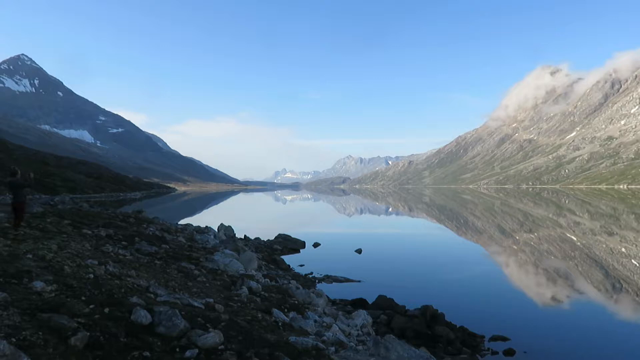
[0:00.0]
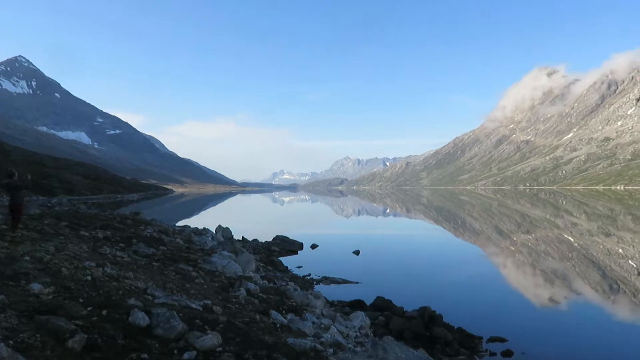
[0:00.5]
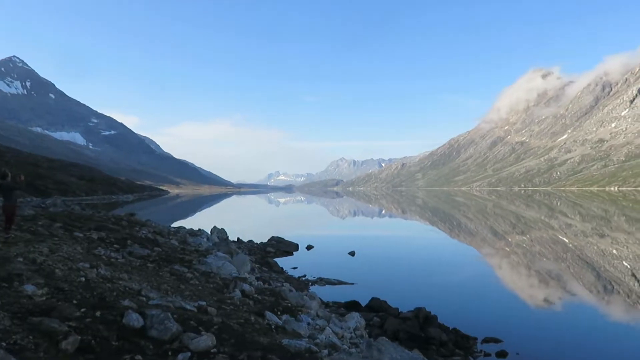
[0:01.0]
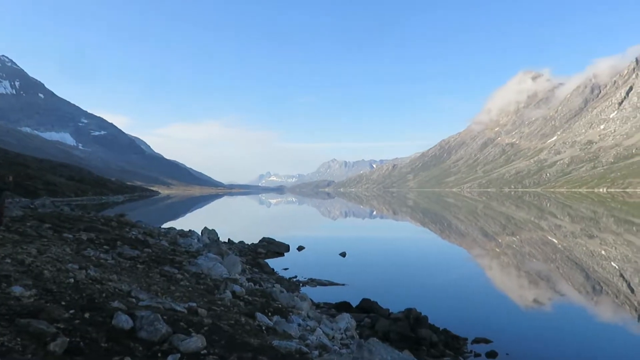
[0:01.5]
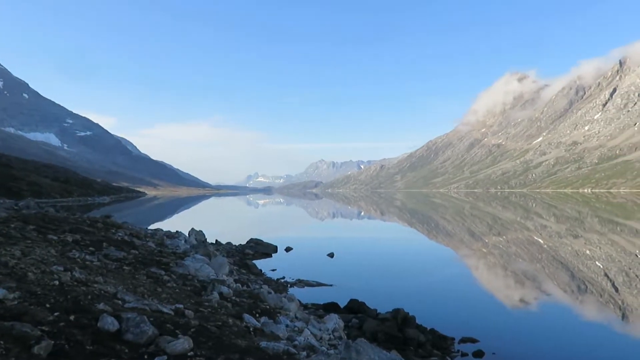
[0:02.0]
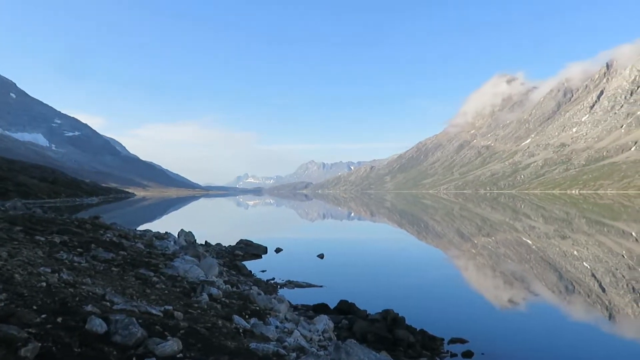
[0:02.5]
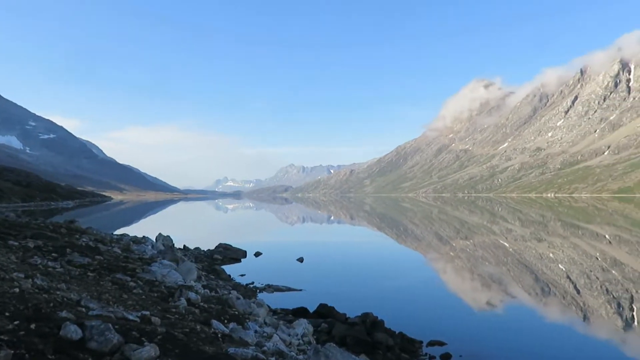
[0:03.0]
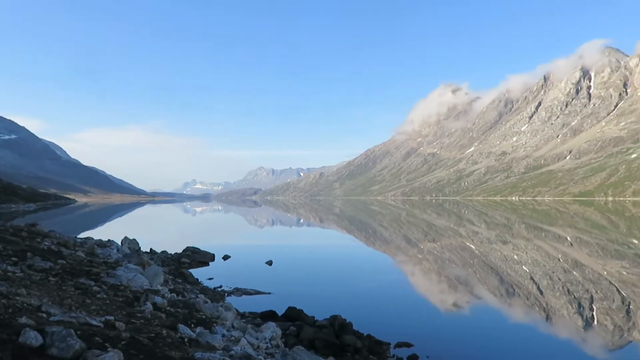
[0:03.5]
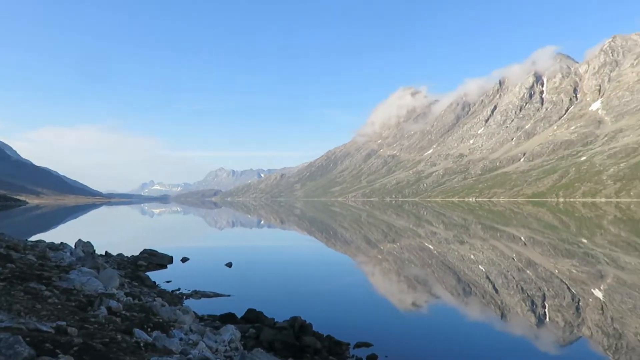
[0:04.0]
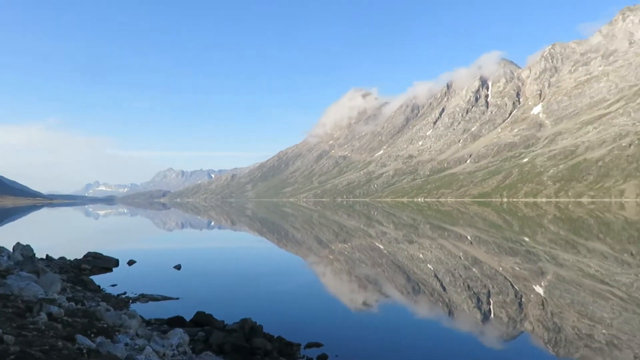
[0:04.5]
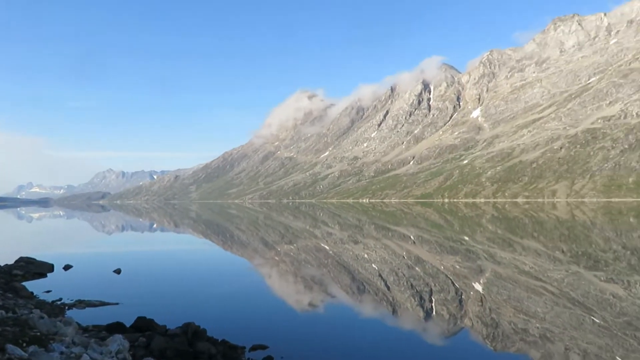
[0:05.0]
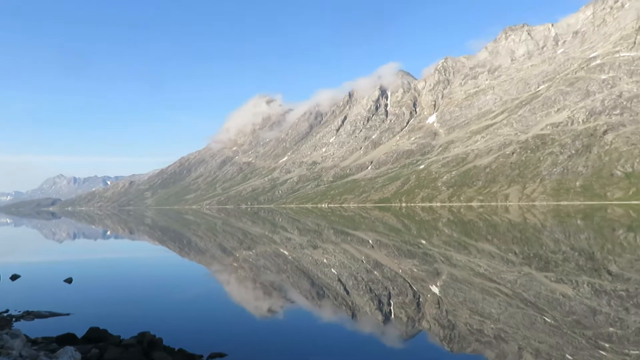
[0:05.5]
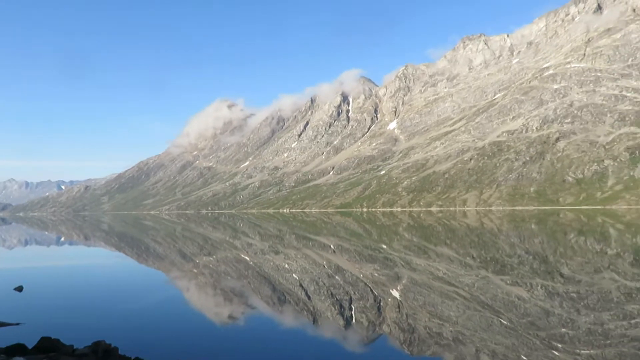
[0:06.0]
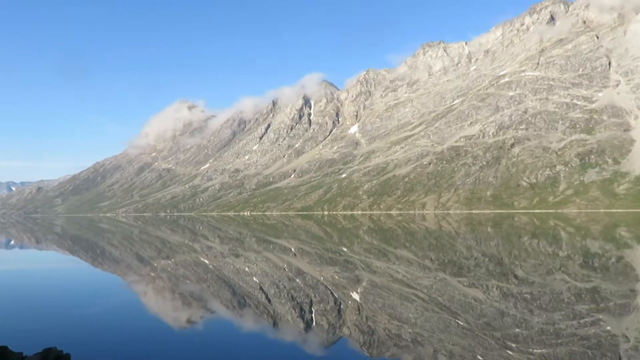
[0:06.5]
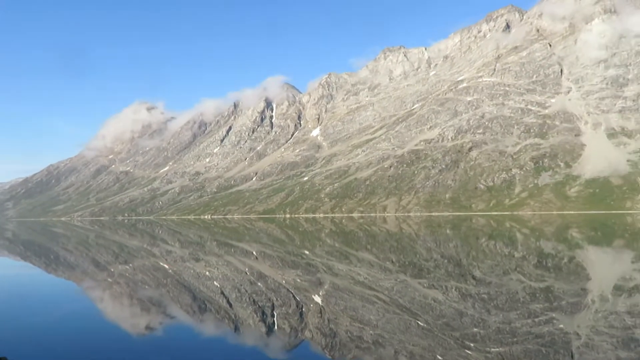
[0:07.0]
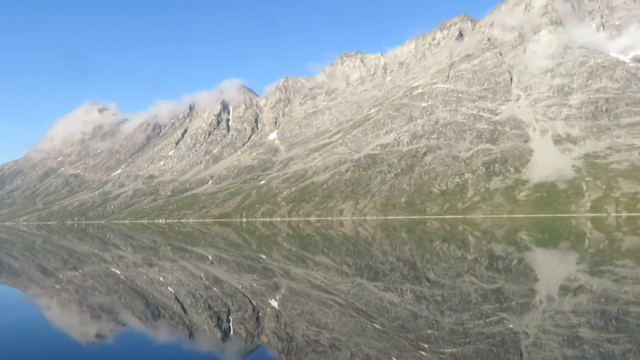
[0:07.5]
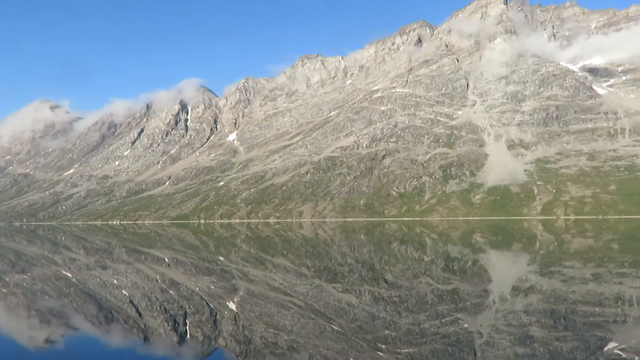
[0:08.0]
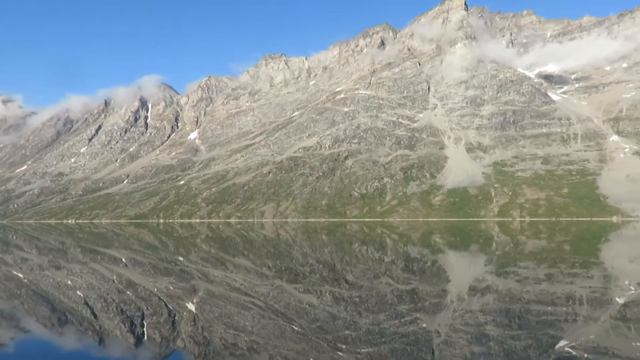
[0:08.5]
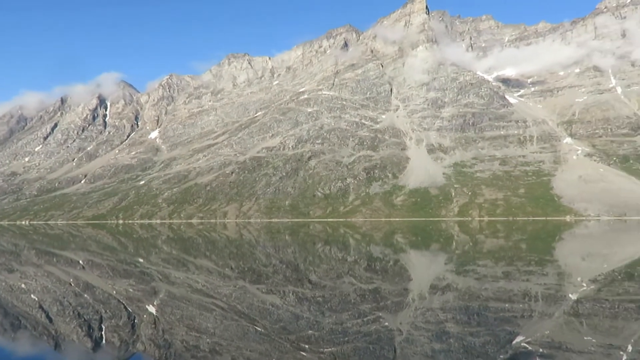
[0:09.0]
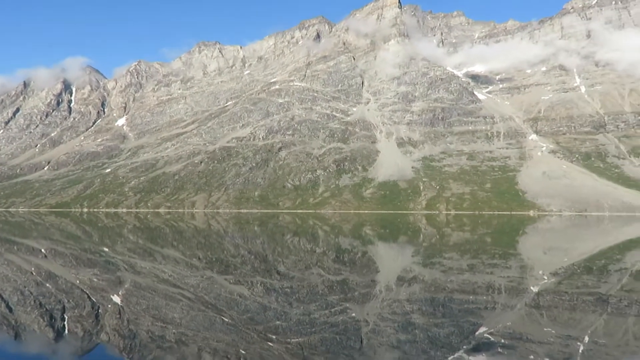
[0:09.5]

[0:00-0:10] A scenic view shows a mountainscape and a wide lake. At first, on the left of the frame, there is very rocky terrain, with dark black rocks about a foot in size each. This gives way to a flatter mountainous area on the left with some white, snow-covered areas. In the centre of the screen is a very large, flat lake, pale to turquoise blue in colour. Above it on the horizon there is some light white cloud, with some darker blue cloud at the top of the screen. On the right of the screen is a mountainscape as the camera pans round.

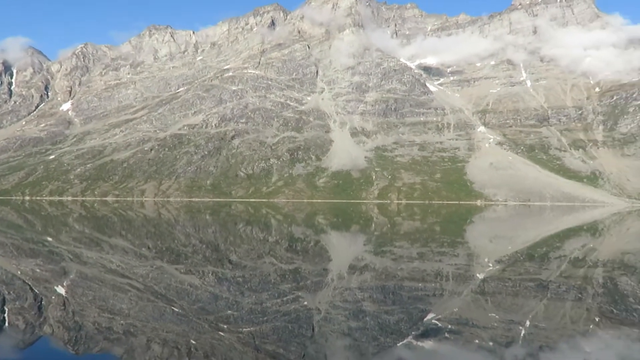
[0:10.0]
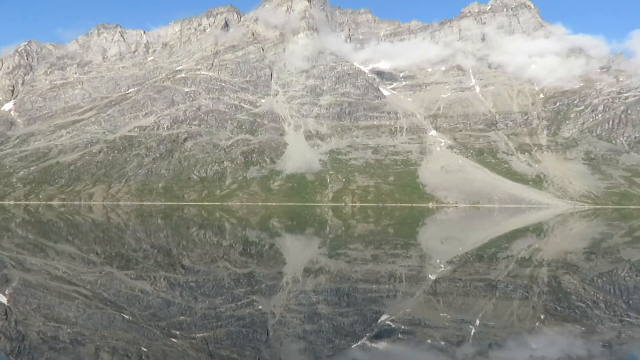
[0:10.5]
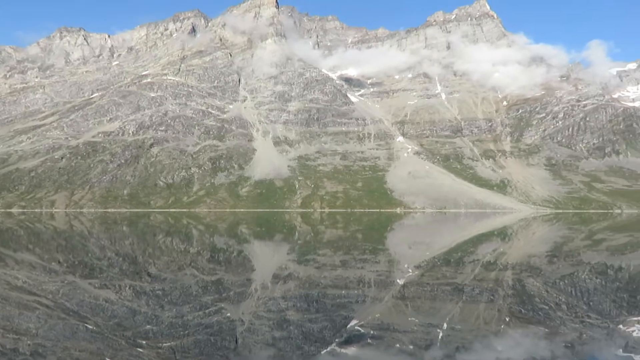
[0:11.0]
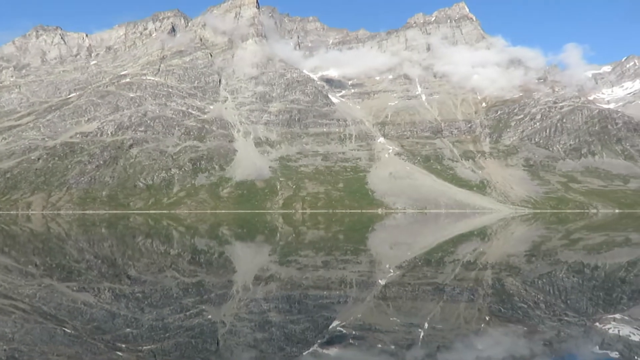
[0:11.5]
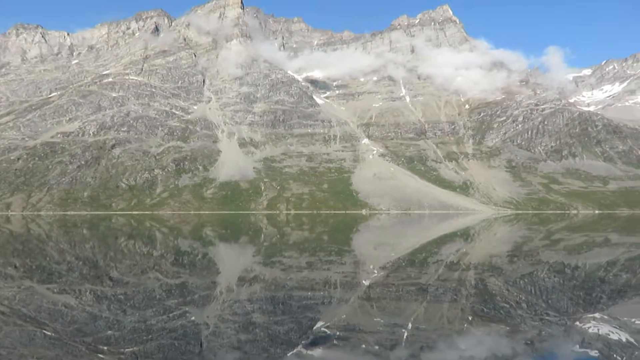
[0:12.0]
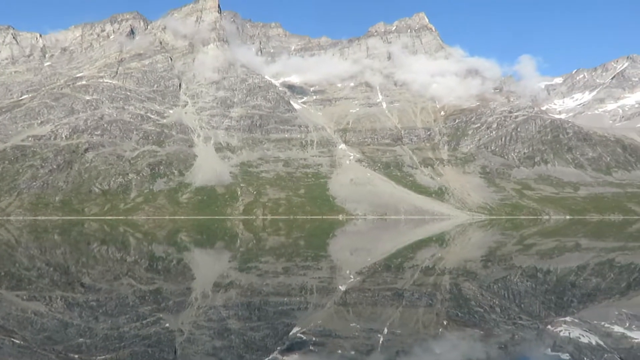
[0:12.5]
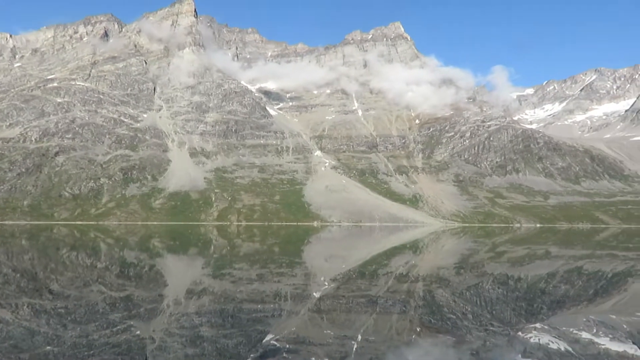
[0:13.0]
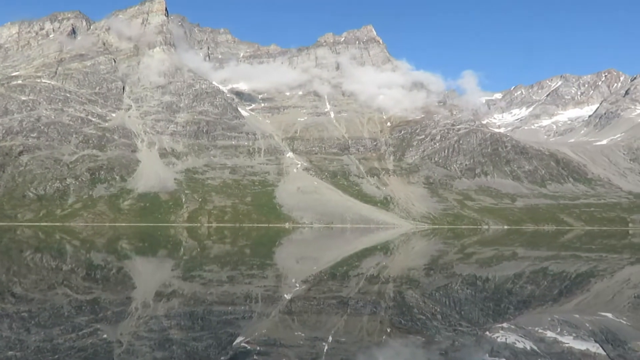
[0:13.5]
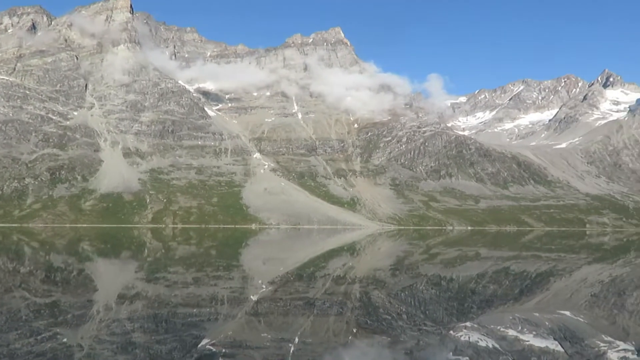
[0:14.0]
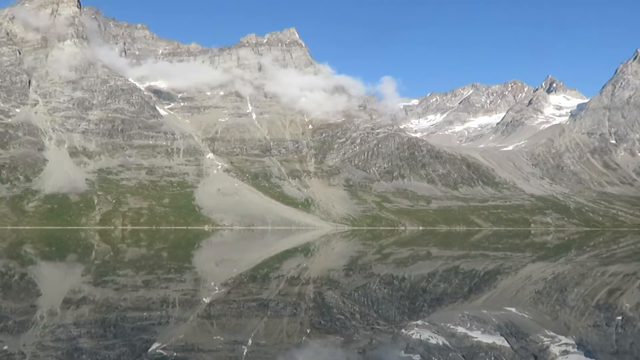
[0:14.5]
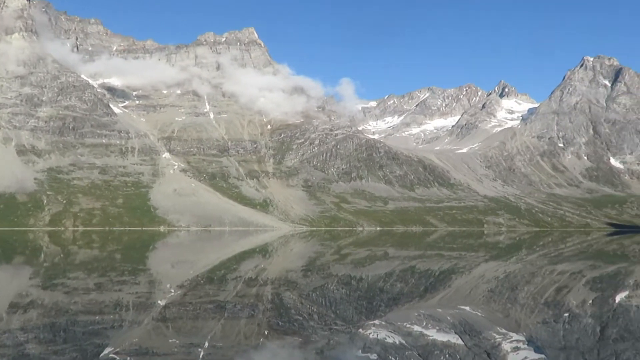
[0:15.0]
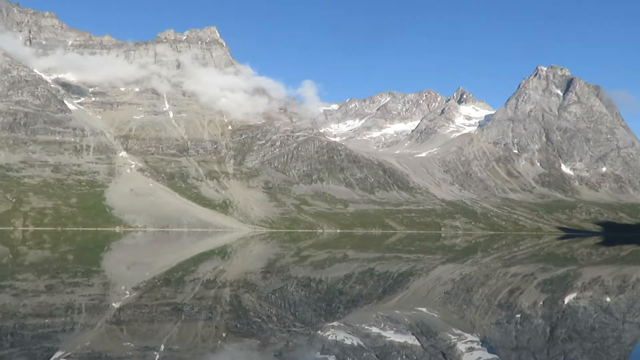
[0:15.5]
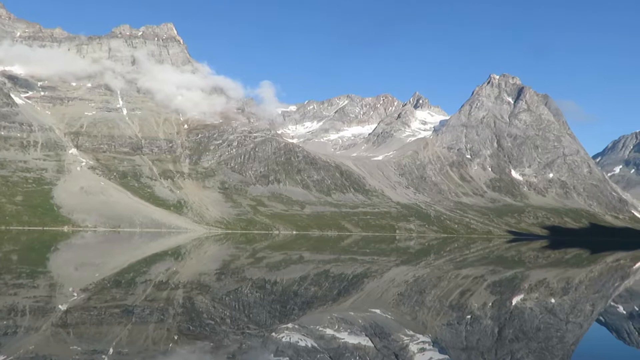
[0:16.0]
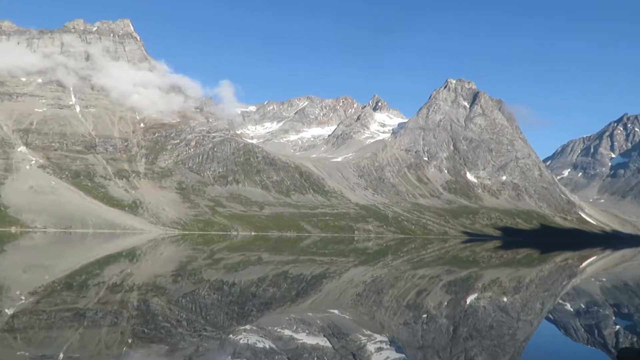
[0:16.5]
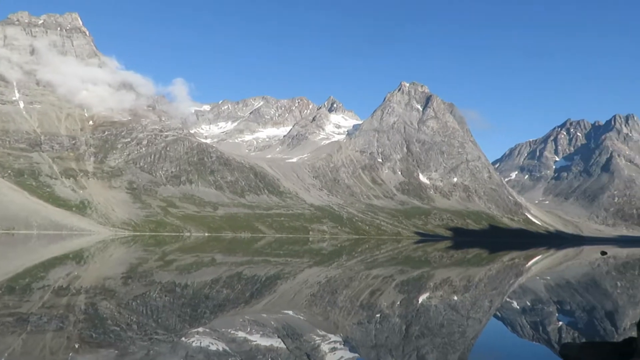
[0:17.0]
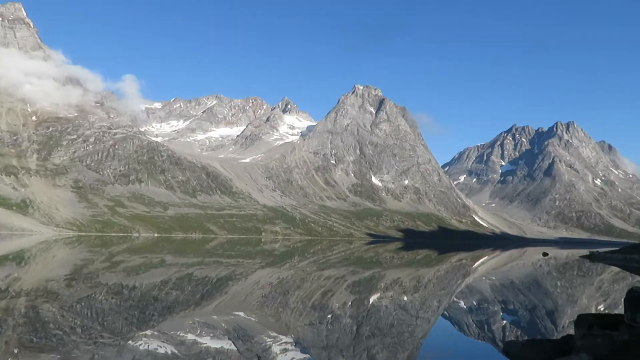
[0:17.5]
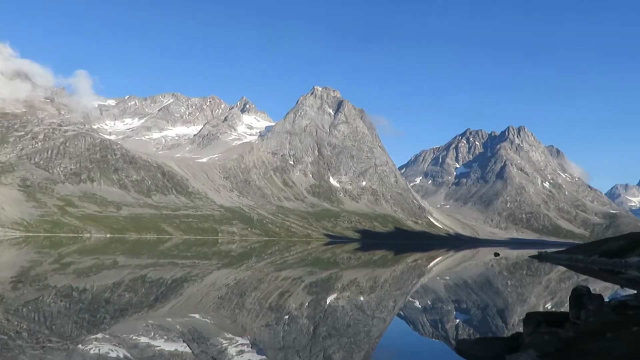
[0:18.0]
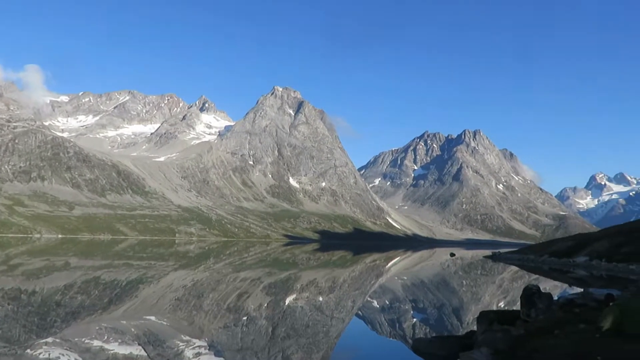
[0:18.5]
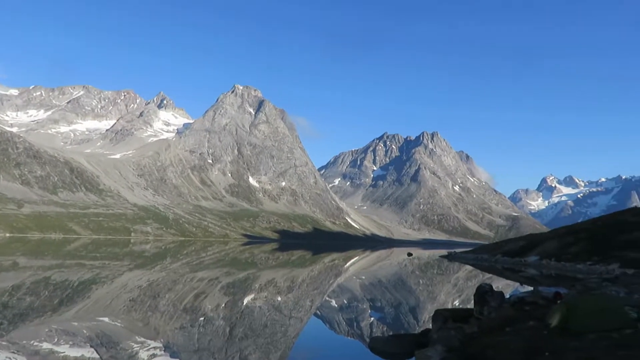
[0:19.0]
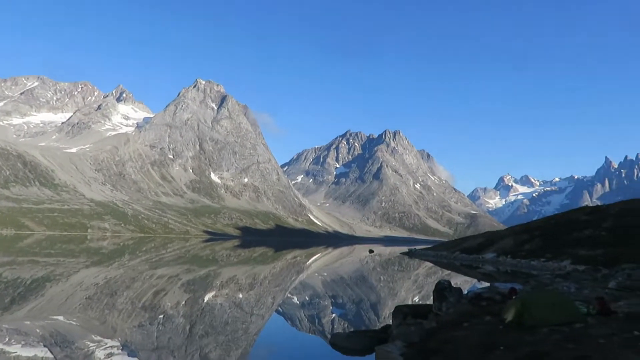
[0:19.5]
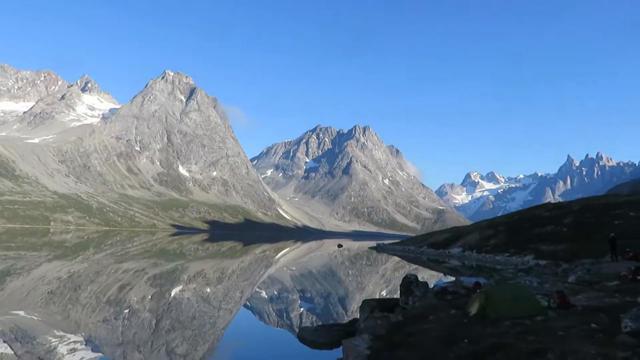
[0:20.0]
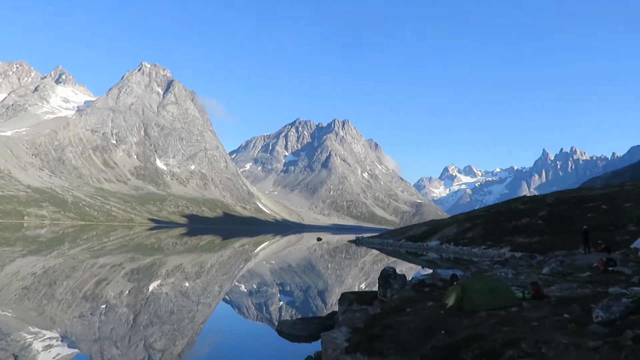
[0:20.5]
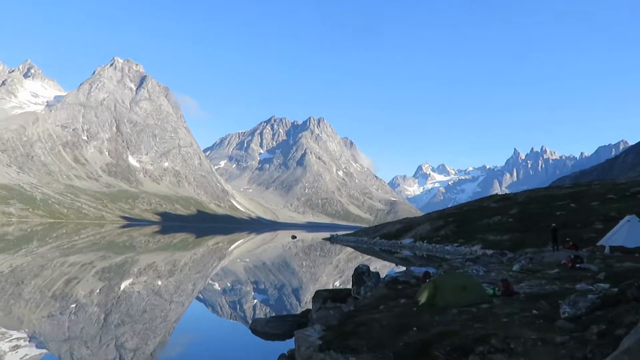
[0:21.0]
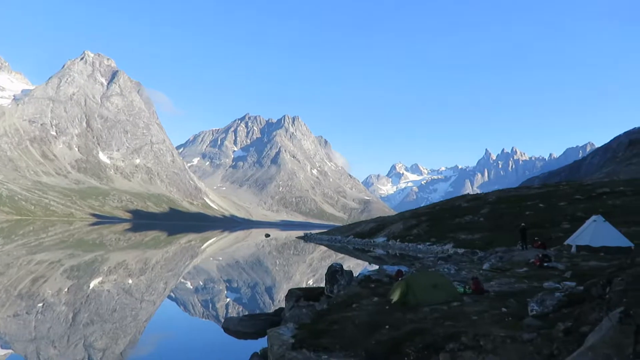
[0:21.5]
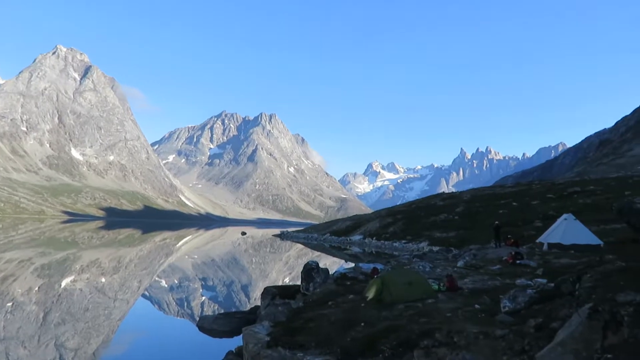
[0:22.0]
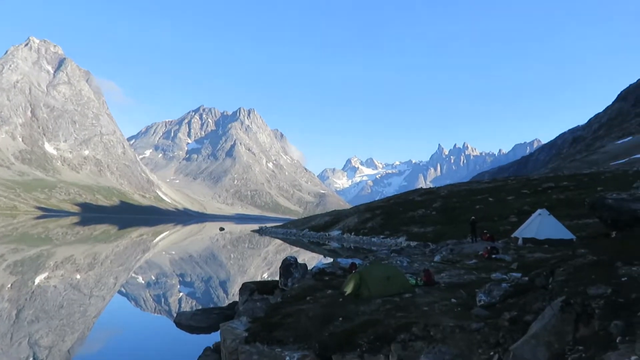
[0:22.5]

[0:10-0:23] The camera pans around a mountainscape. The mountains dominate the screen, and in the lower quarter of the frame they are reflected in a lake. Above the mountains is a very clear blue sky with only the occasional white fluffy cloud. The hilly mountains are beige, grey and very pale green, with white patches of what appears to be a sprinkling of snow, suggesting a very high altitude. As the camera pans round, it finally reaches a small man-made shelter with a white roof, and there appear to be man-made tracks through the mountains.